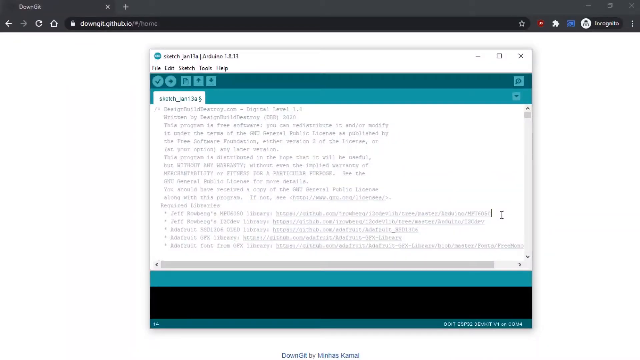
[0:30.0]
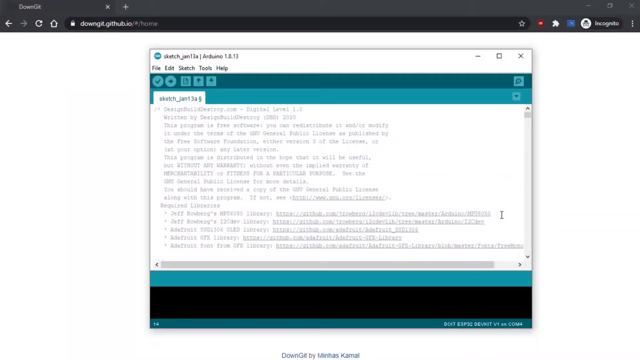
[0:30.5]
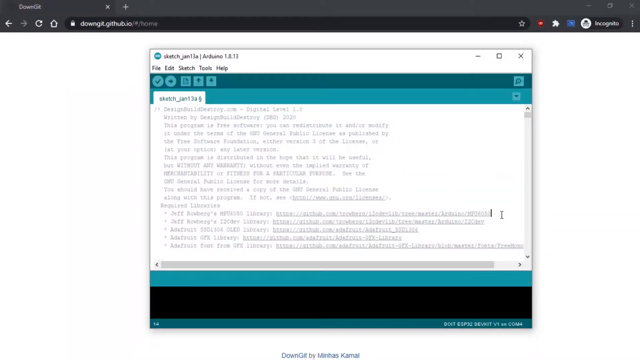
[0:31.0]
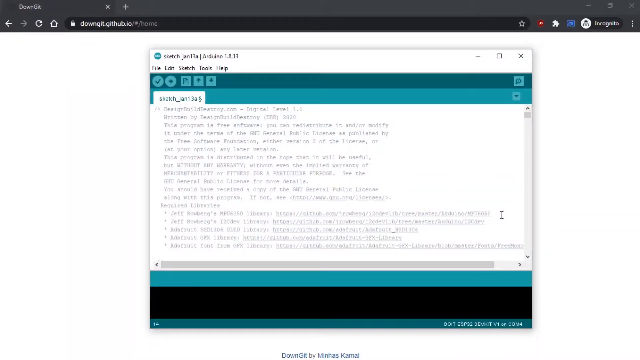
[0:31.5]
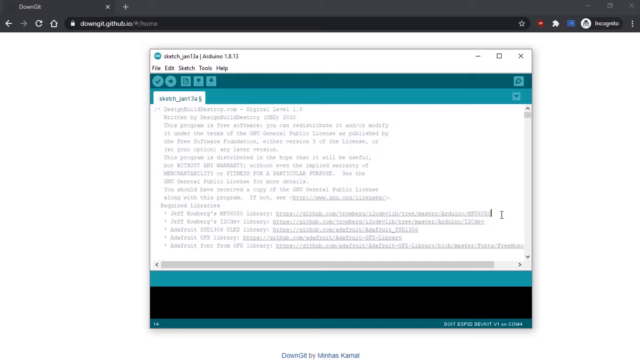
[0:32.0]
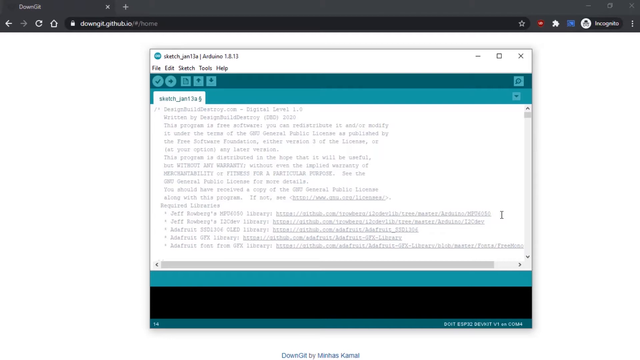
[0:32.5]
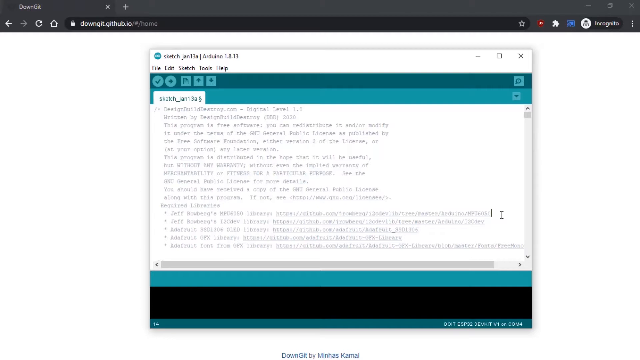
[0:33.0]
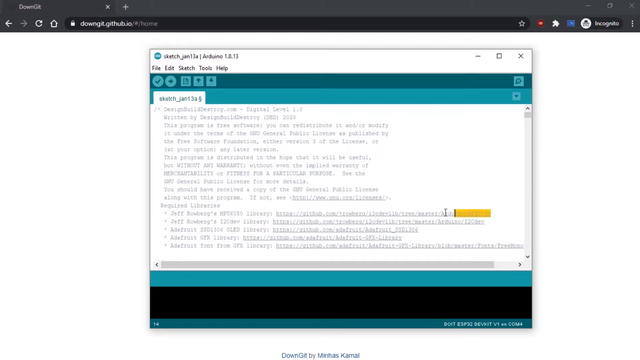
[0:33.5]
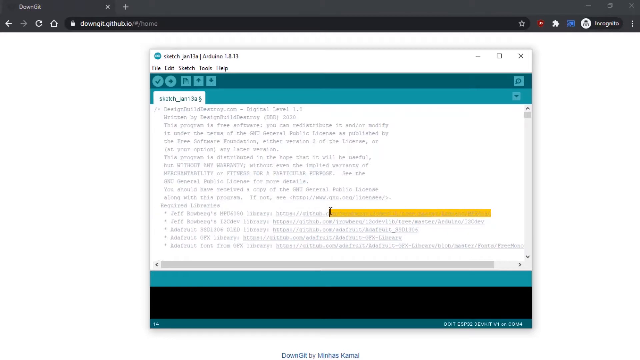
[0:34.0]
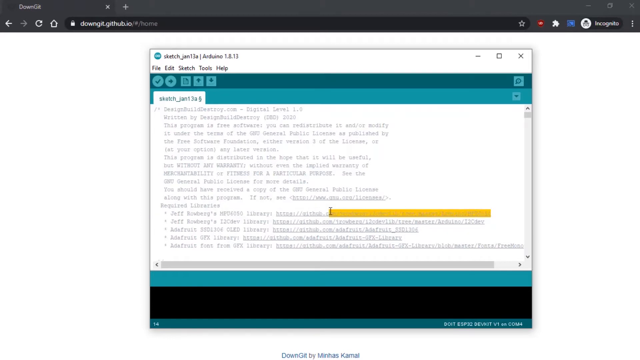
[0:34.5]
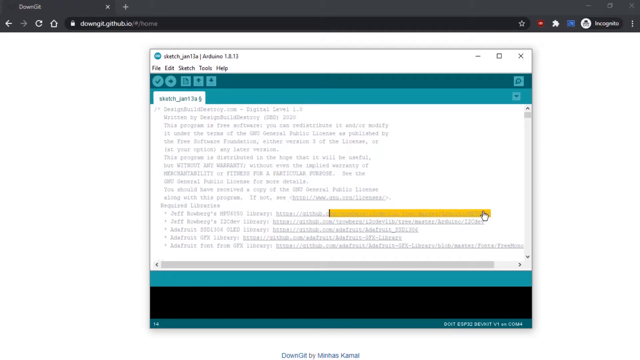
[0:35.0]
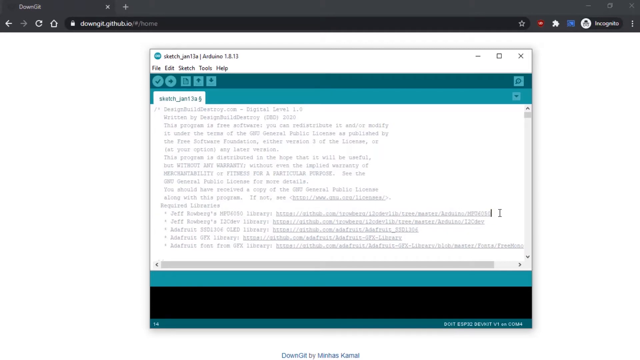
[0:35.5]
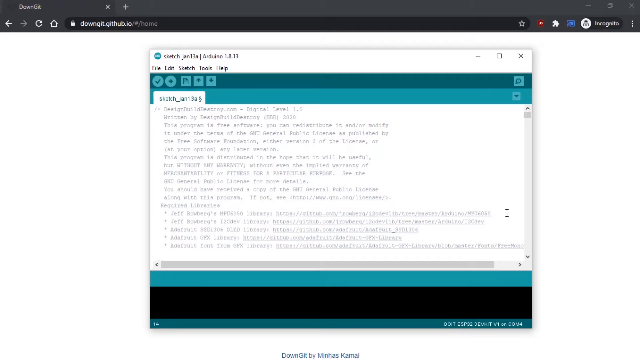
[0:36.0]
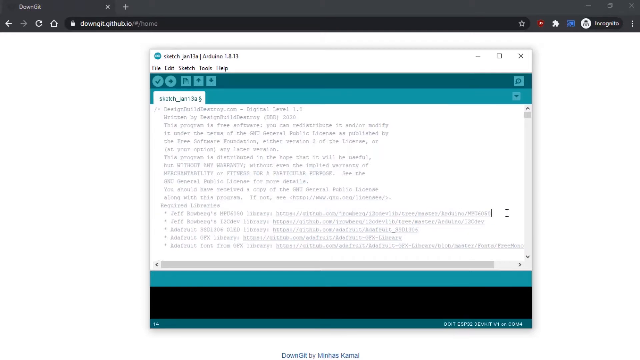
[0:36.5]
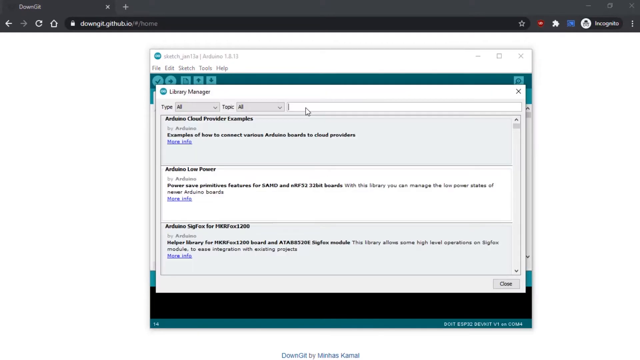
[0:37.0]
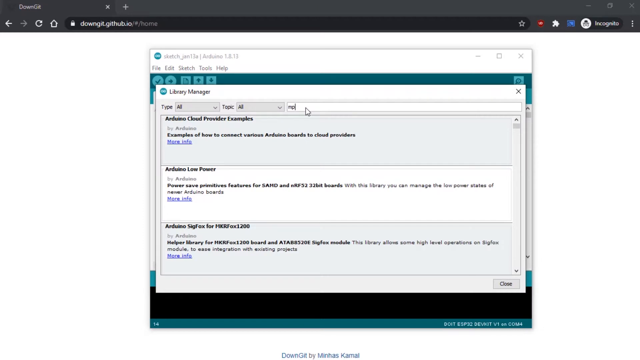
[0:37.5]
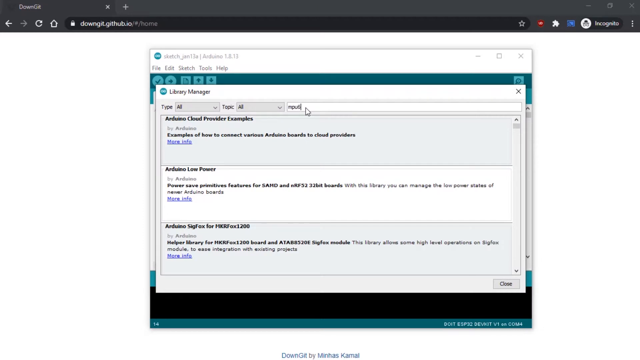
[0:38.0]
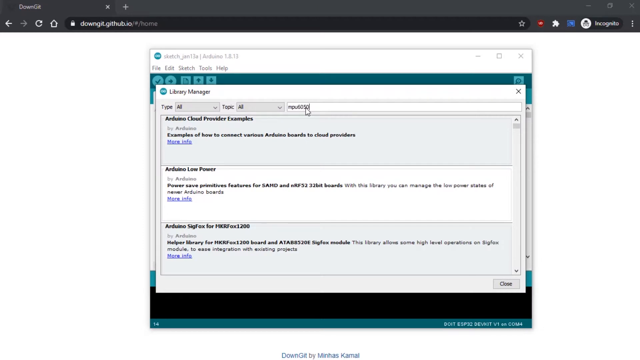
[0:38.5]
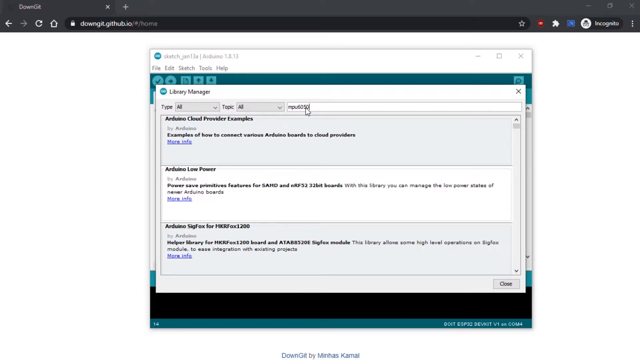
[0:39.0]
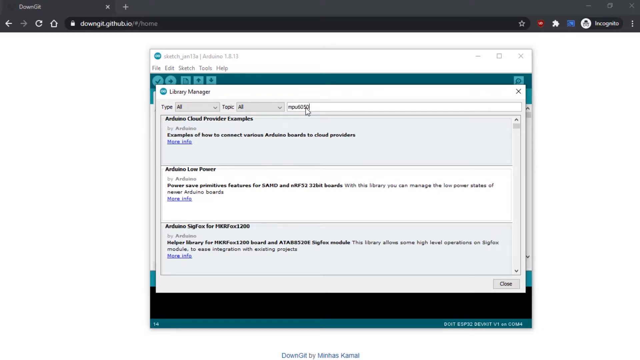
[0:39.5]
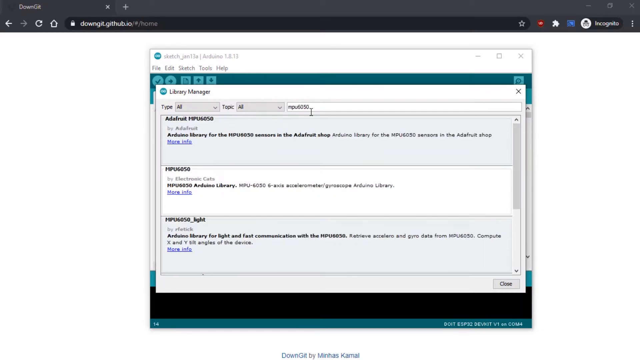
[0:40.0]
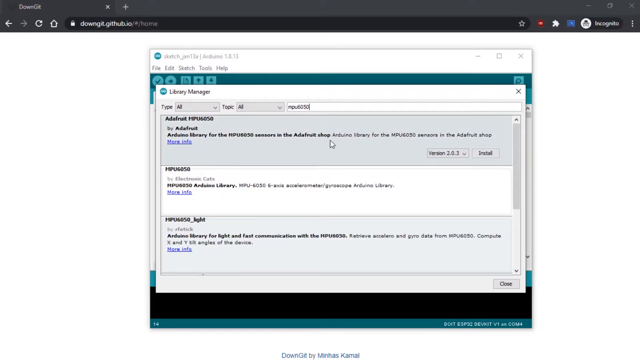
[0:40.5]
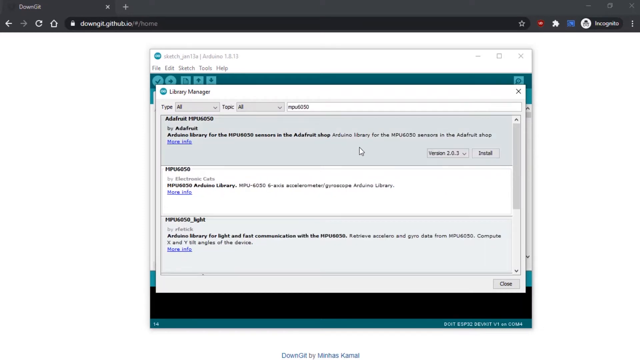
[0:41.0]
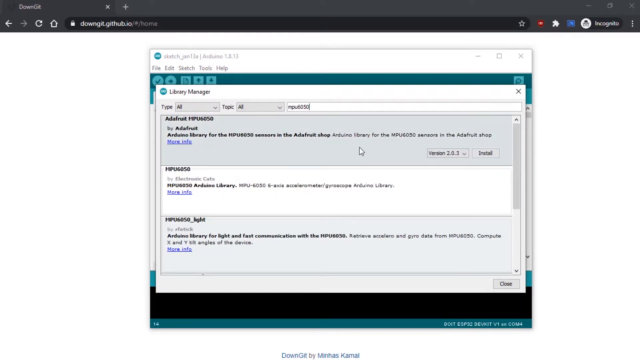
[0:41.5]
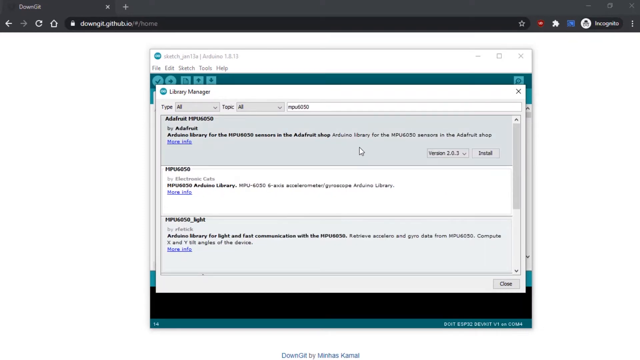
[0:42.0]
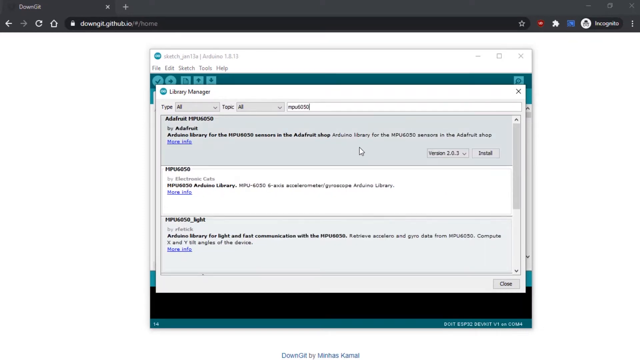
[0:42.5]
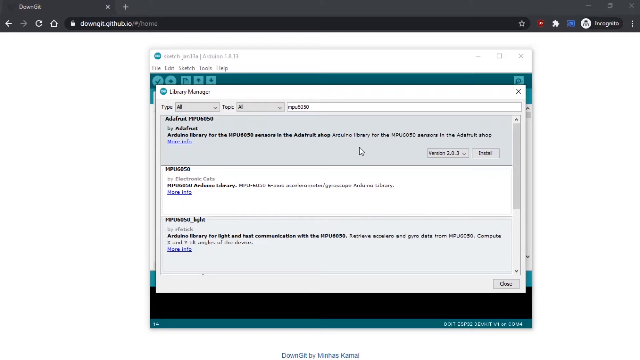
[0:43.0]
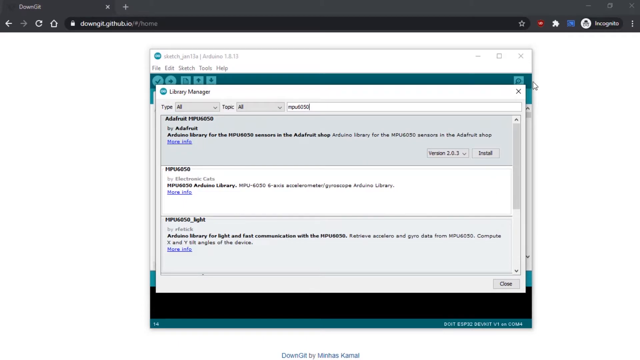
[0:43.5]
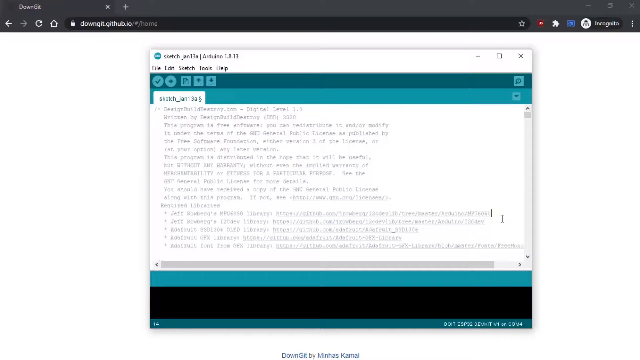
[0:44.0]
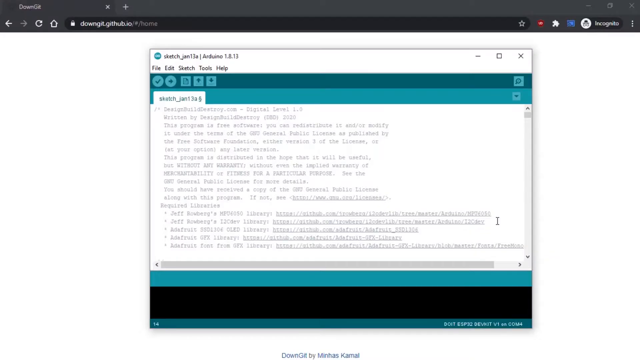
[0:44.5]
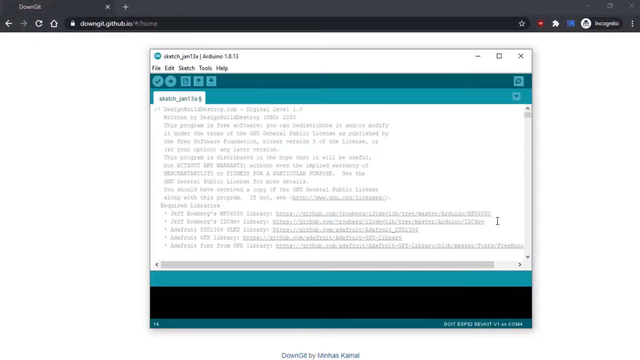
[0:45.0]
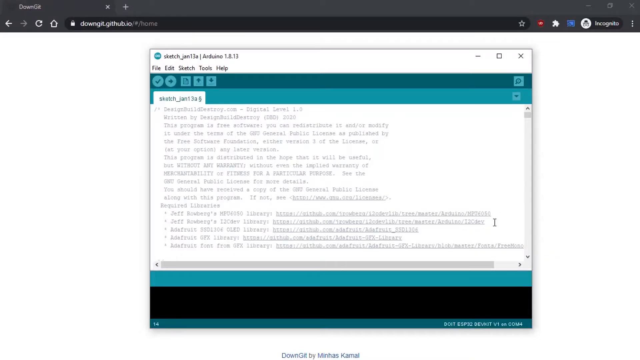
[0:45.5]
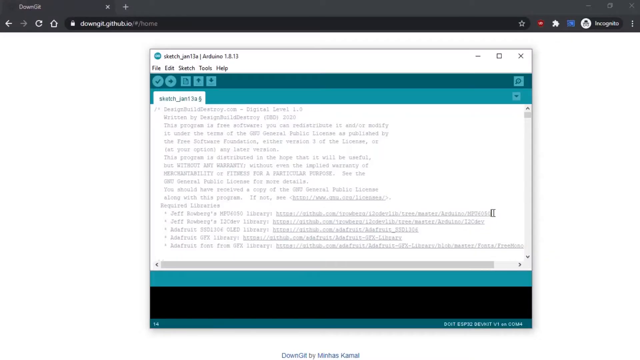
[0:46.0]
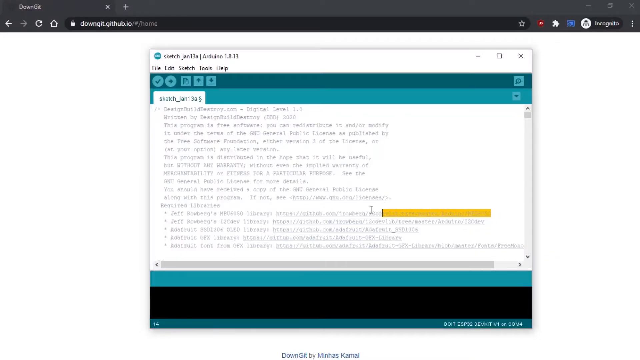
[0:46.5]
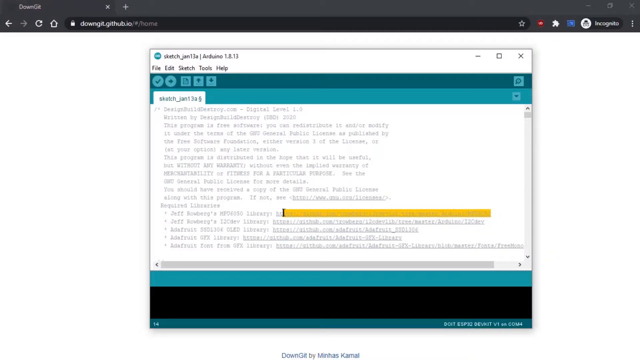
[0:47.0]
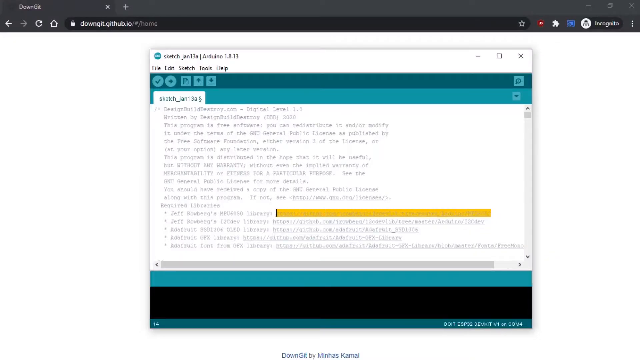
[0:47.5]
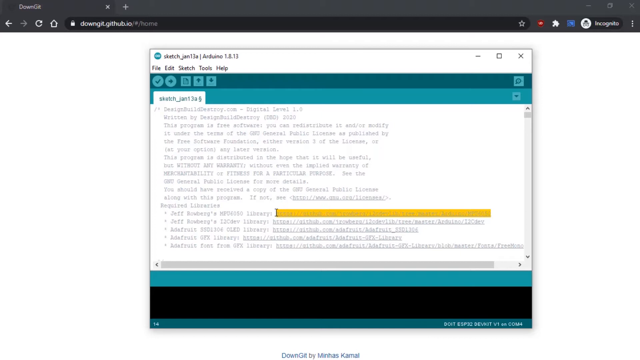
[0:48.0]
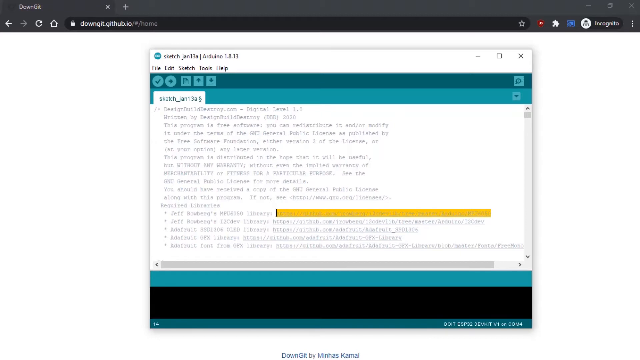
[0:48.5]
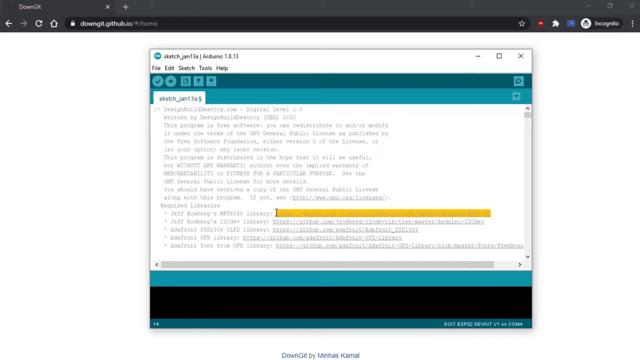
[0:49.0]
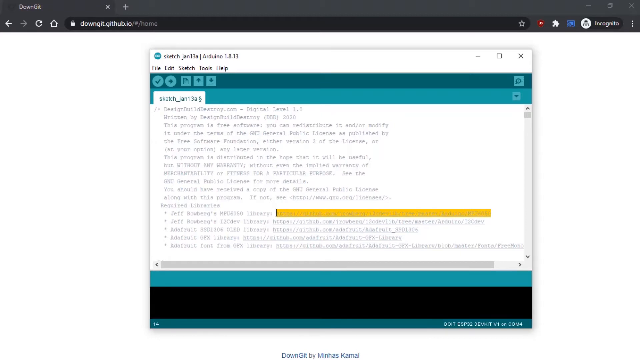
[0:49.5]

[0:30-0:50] A recording of a computer screen shows an internet browser window with one active tab, overlaid by a smaller window containing a sketch file open in the Arduino application. Using the cursor, the user highlights a line of text under the required libraries section. They then open a different window, the Arduino application's library manager, and type text into an input to search for a library, which brings up a list of libraries. The user goes back to the window containing the Arduino sketch file and highlights in yellow the web address linked to the first library in the list of required libraries.